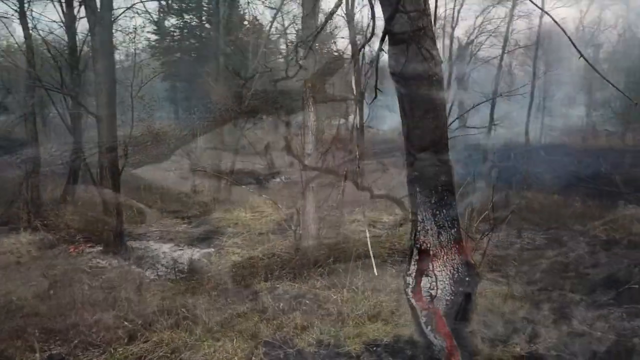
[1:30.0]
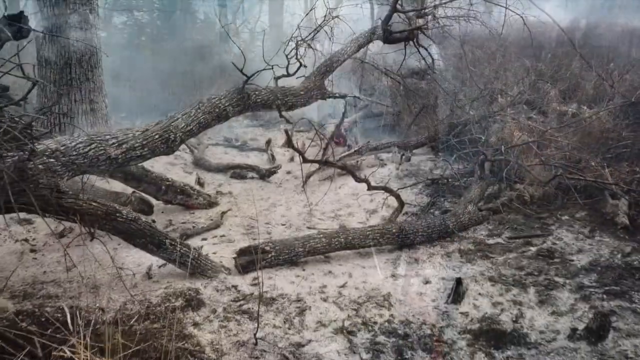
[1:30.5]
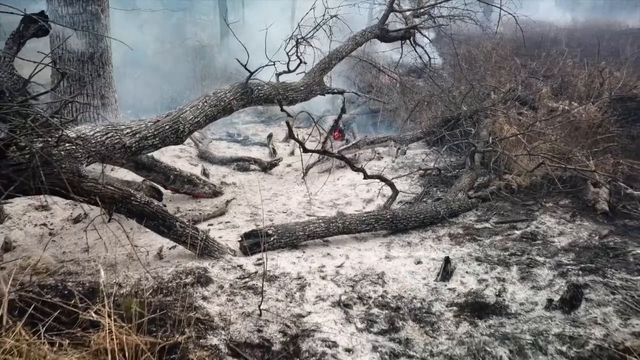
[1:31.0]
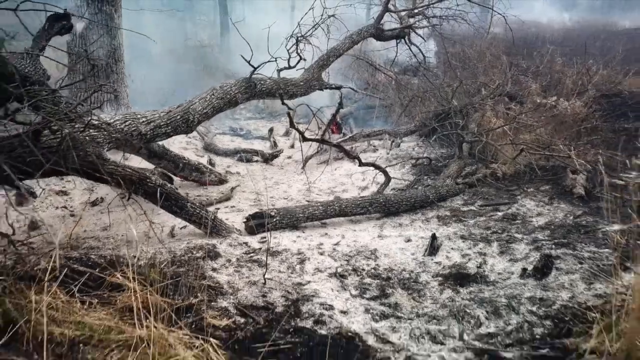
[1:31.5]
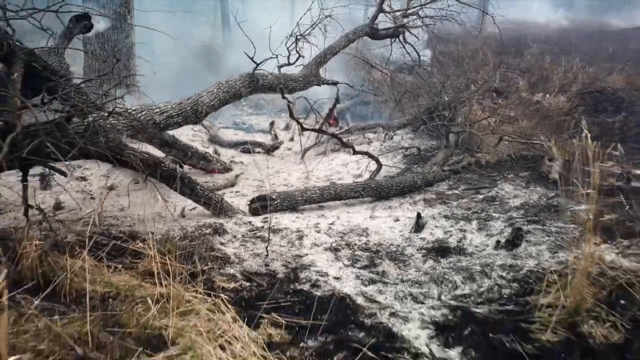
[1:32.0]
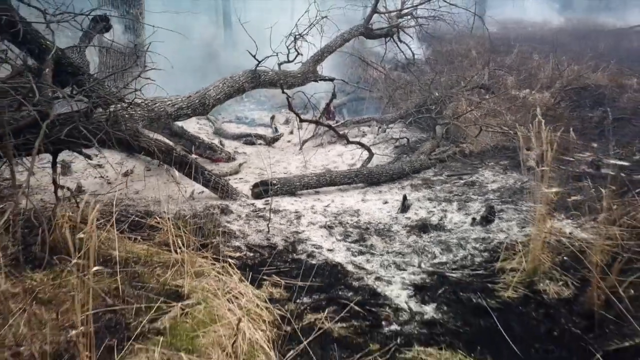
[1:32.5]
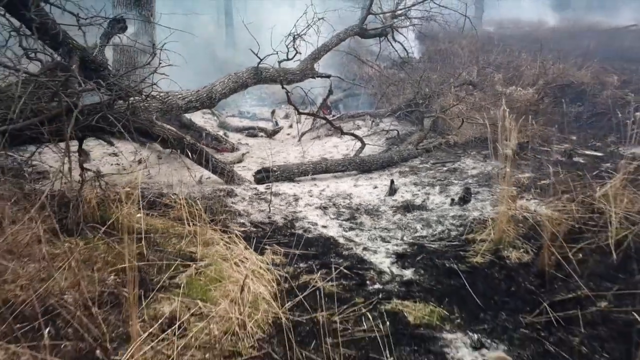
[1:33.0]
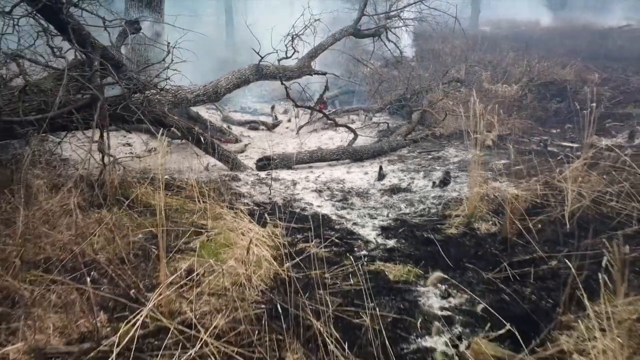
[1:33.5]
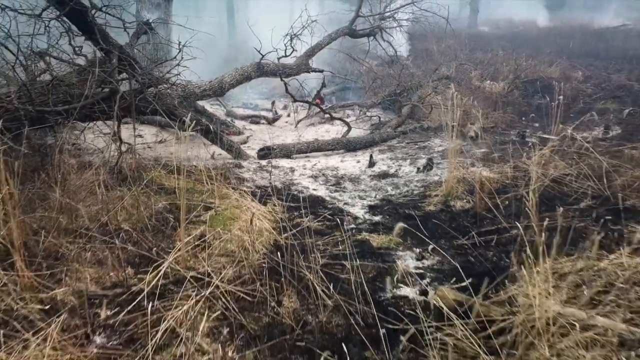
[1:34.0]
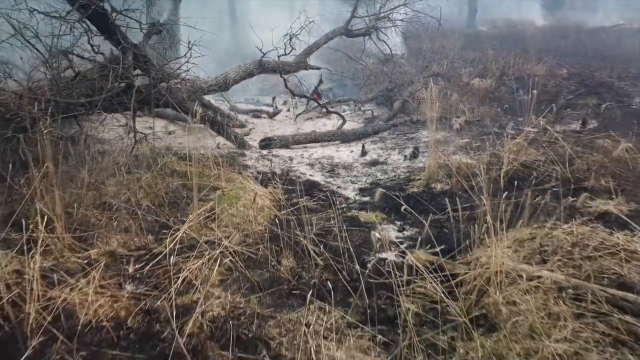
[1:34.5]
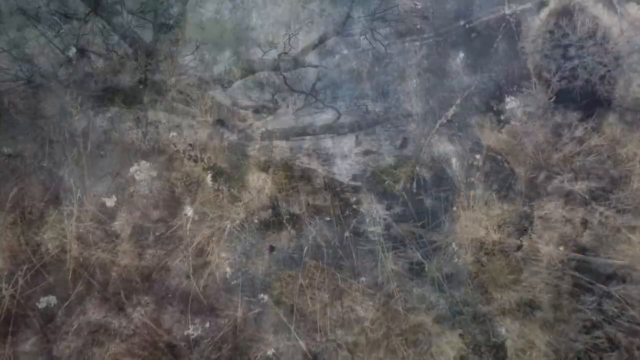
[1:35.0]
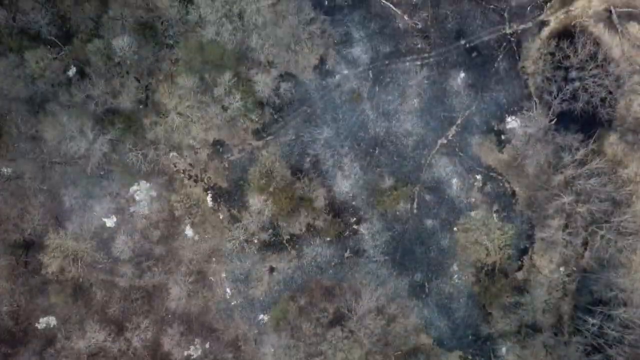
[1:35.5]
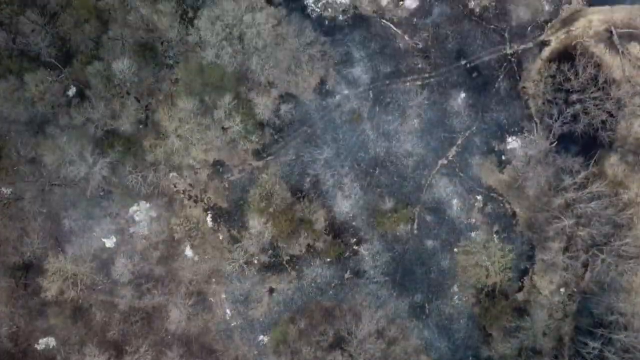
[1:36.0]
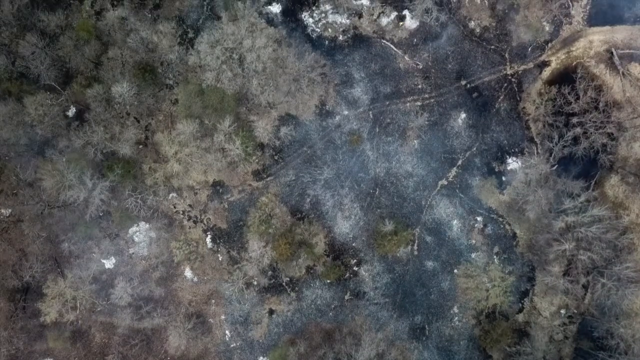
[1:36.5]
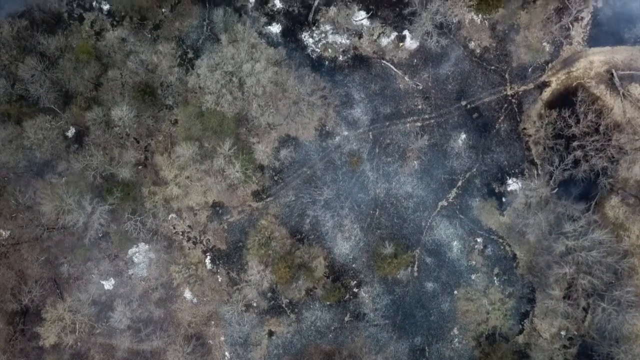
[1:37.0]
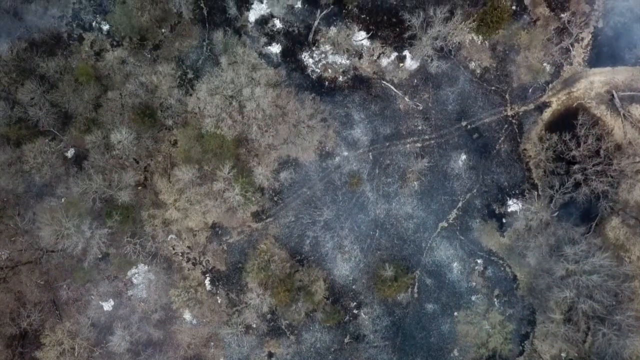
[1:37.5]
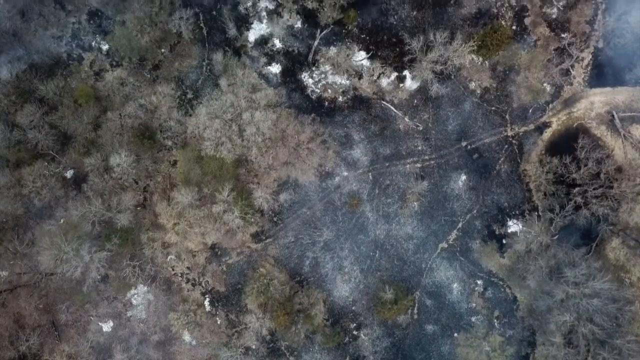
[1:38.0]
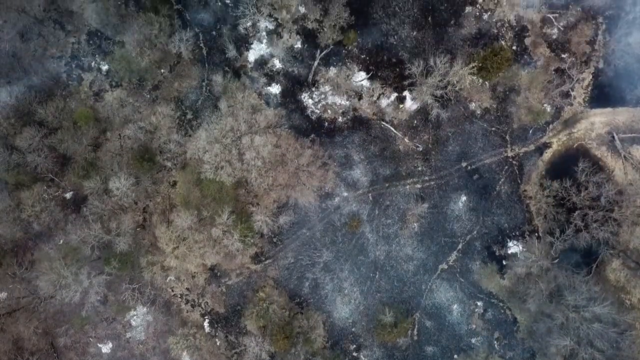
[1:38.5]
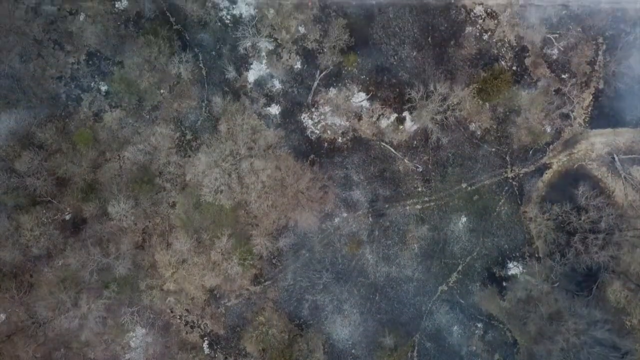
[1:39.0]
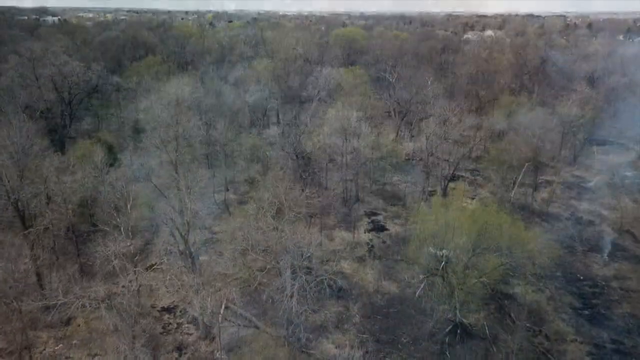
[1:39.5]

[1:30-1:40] Trees in a forest that was put through a controlled burn are still burning slightly. Some of the trees are still smoking, while the fire did not reach others as much. There are not many leaves on the trees, so it is possibly fall or winter. The colors are mostly beige, white, gray, black and brown, with a little yellow as well.